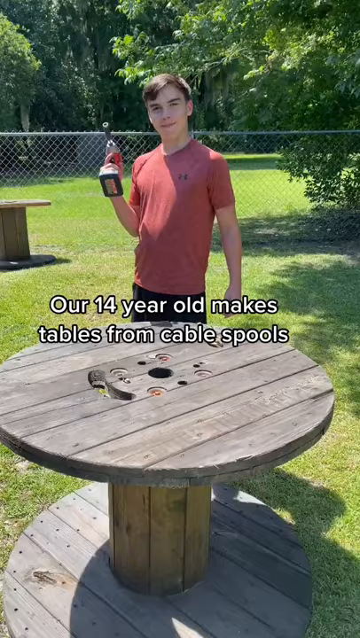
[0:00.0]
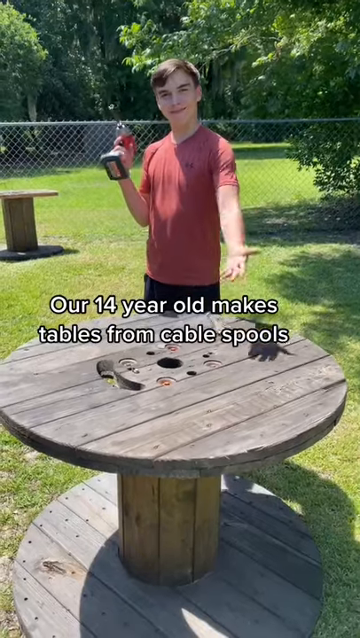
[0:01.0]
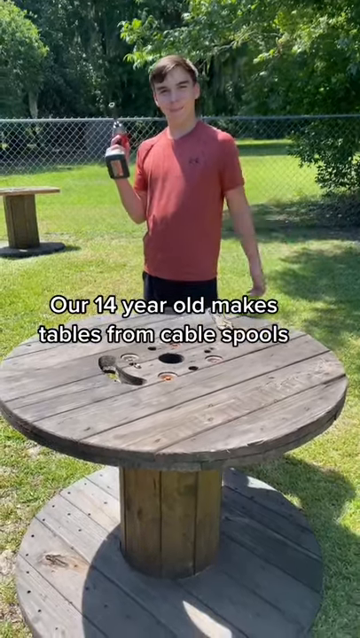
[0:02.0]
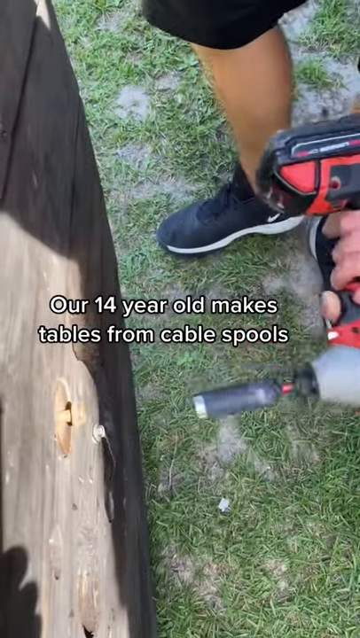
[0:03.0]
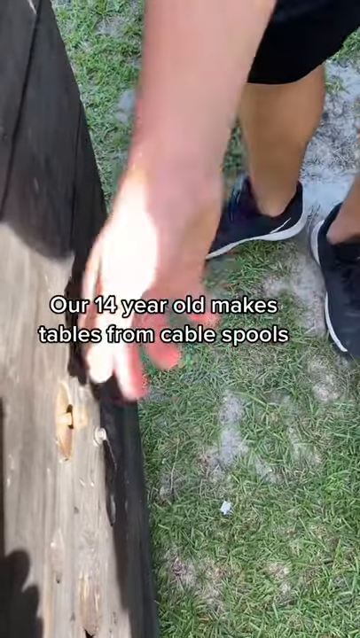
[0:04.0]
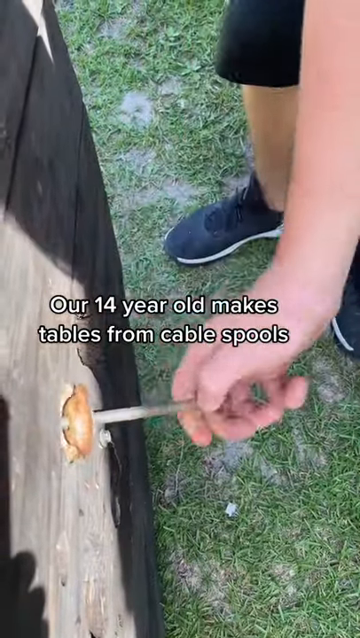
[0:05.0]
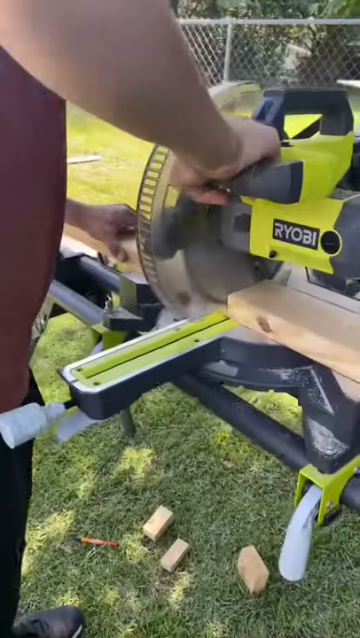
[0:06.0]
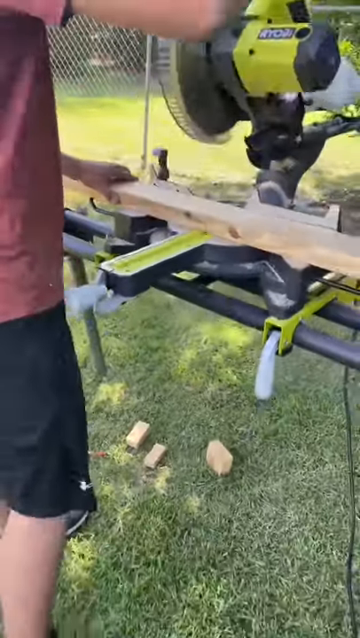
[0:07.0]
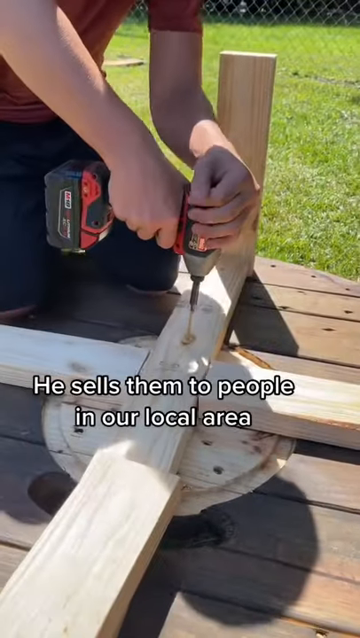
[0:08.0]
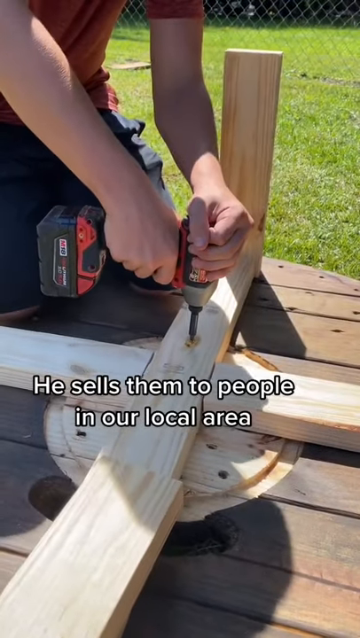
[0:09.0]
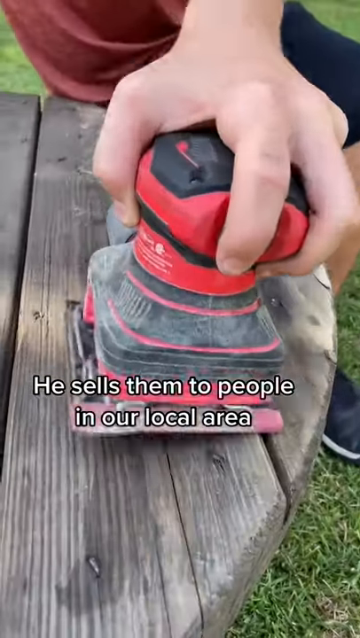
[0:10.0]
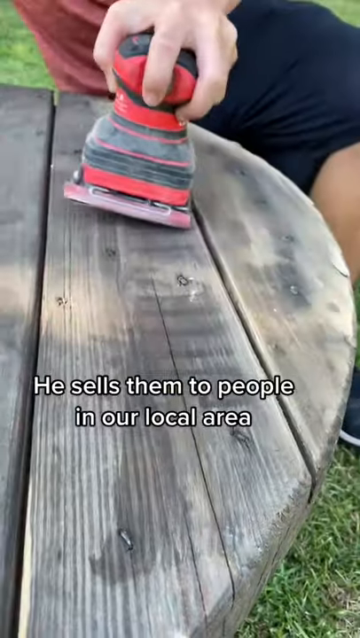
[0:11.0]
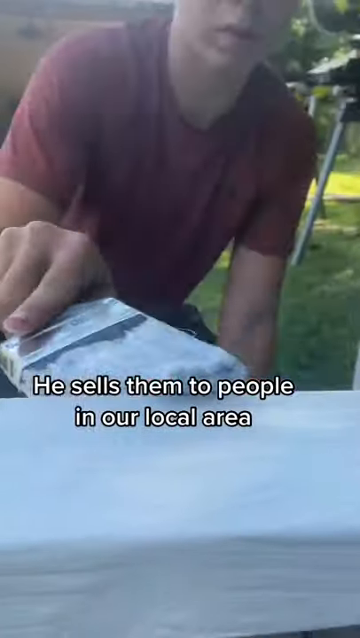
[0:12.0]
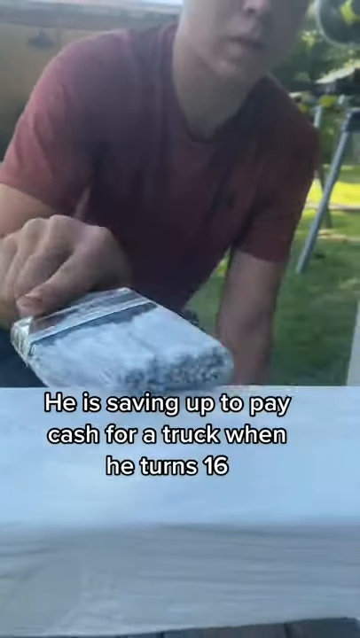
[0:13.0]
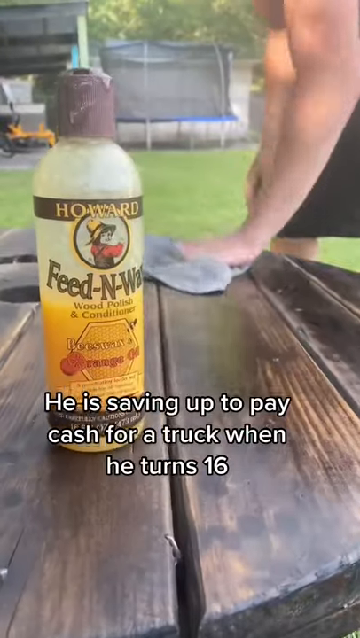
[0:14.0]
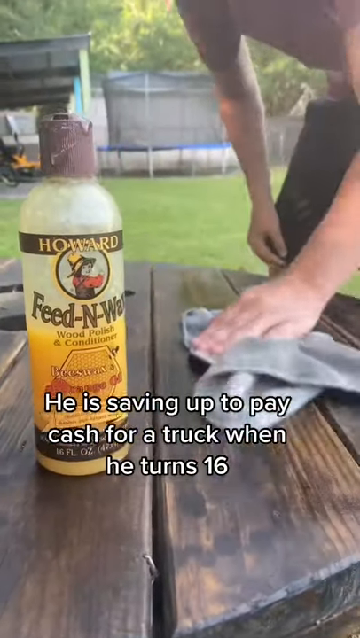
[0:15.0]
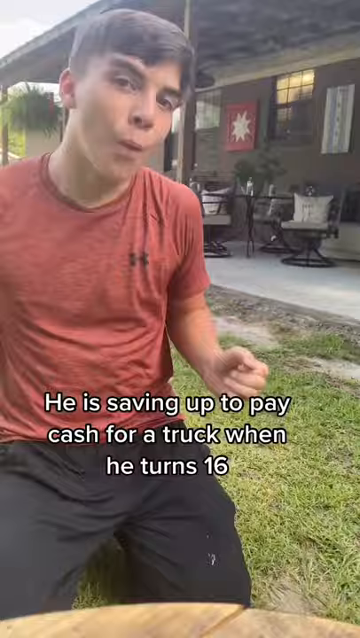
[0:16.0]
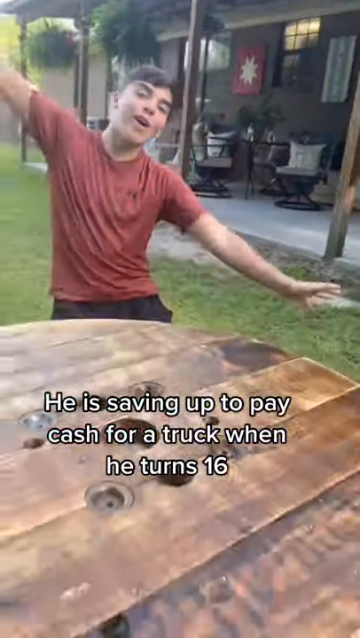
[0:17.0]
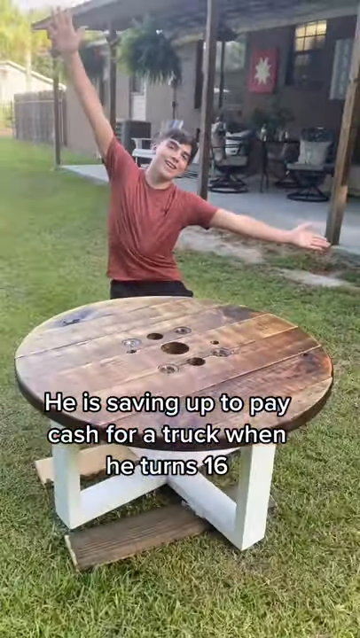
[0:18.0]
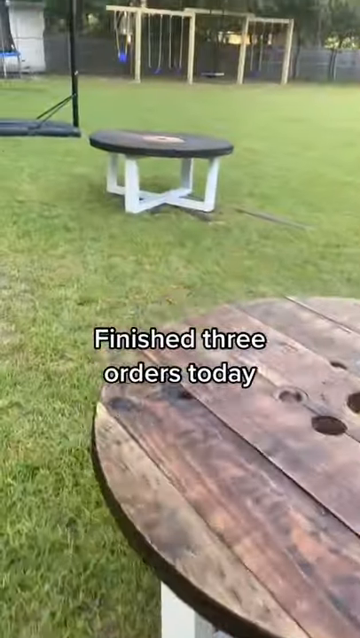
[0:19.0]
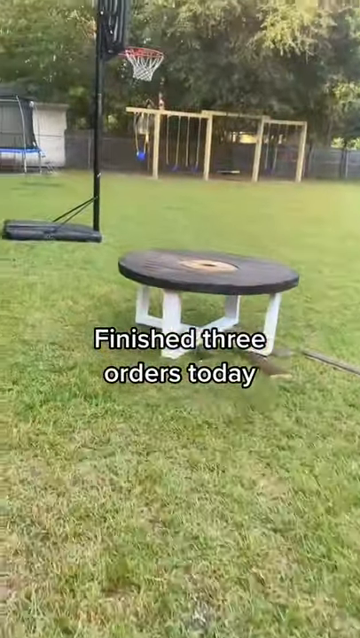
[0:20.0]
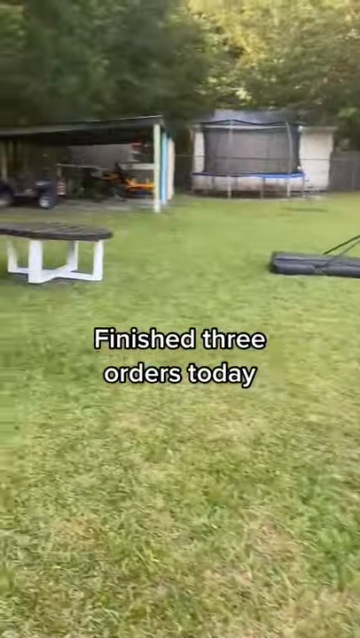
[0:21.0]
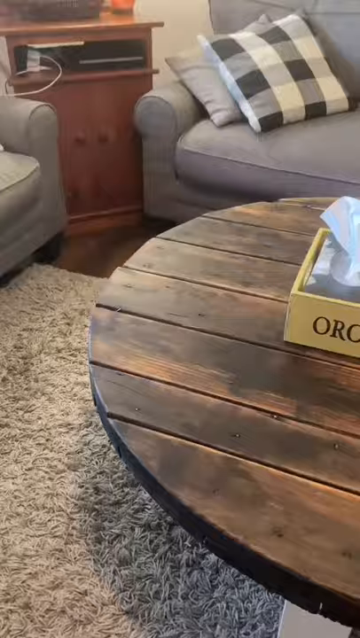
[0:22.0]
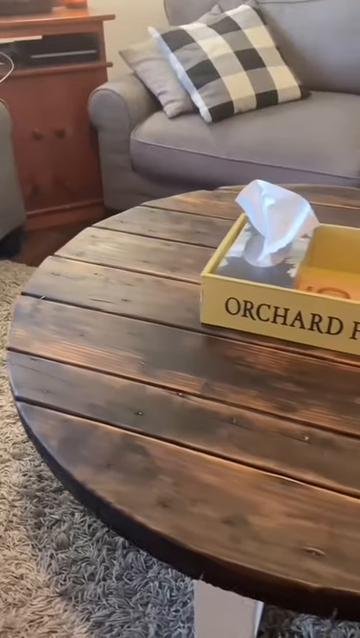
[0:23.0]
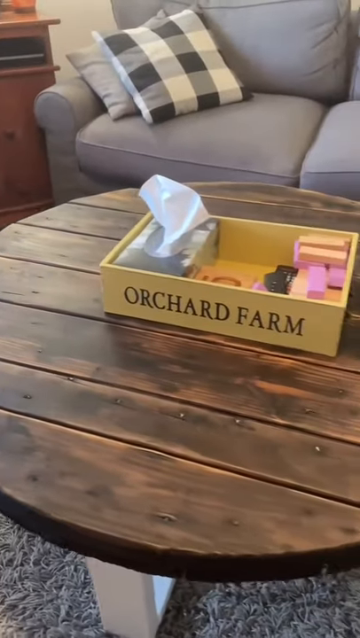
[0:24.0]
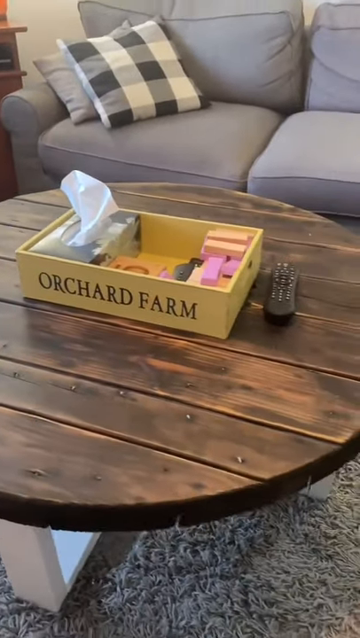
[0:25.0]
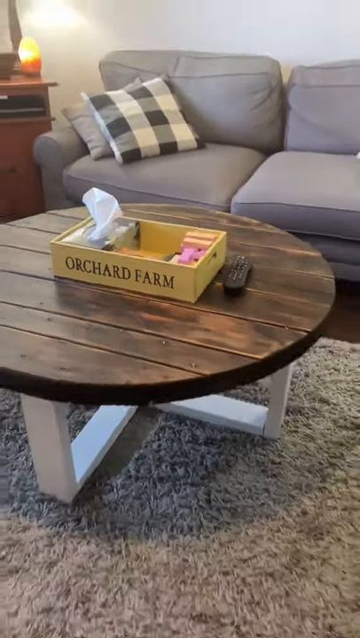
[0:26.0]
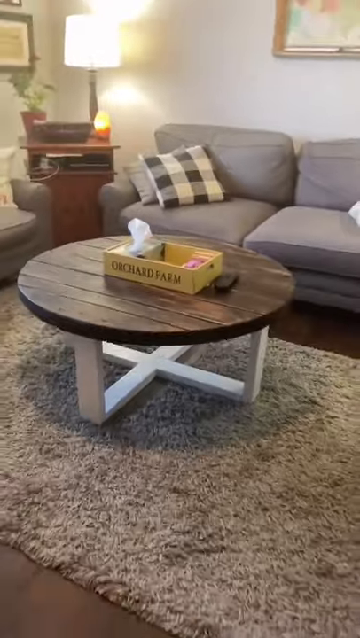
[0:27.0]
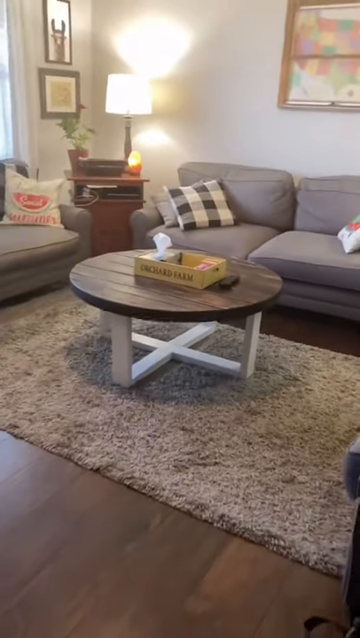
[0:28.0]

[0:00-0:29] A teenager stands next to a wooden table with his hands held out at his sides, holding a drill in one hand. The camera pulls back, revealing that the table is a large wood spool. The view turns to the young man standing at the table as he uses the drill to pull a large nail out of the center of the spool to separate the pieces. Various shots follow of him sanding and painting legs for the table and cutting those legs. He drills the legs into the base of the top of the spool and paints them white. Next he stains the top of the spool a darker brown, then holds out his hands to exclaim. The camera pulls up and cuts to the yard, where three other tables he has already made are drying in the sun. An interior shot then shows an example of the table in someone's living room, which is decorated with an area rug and a couch, with various items on top of the table.